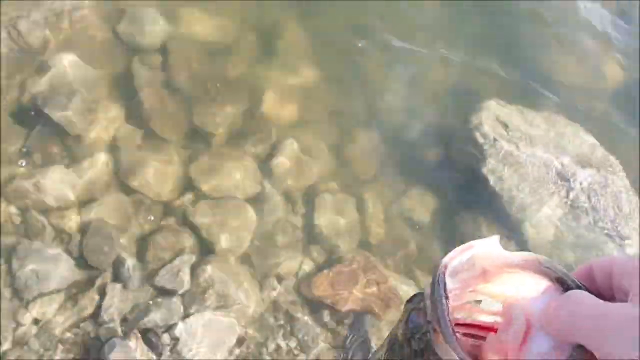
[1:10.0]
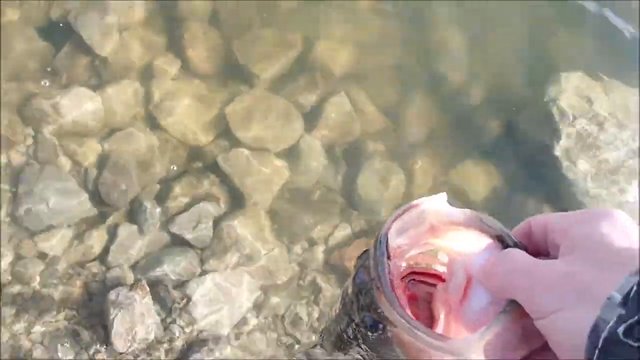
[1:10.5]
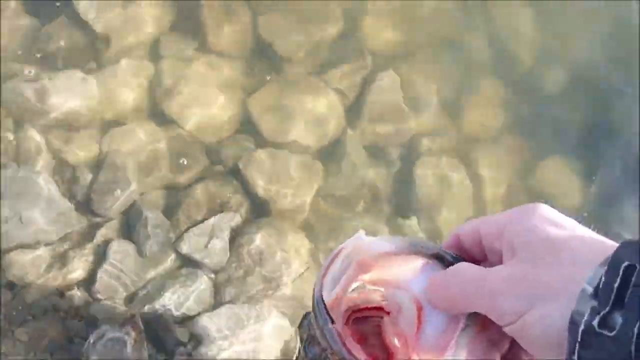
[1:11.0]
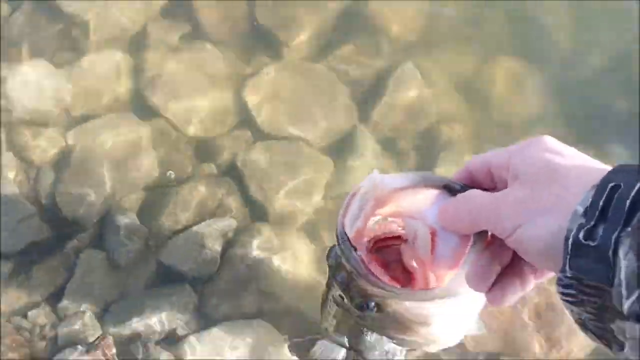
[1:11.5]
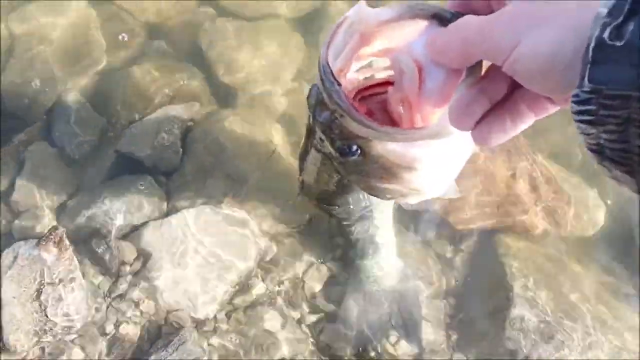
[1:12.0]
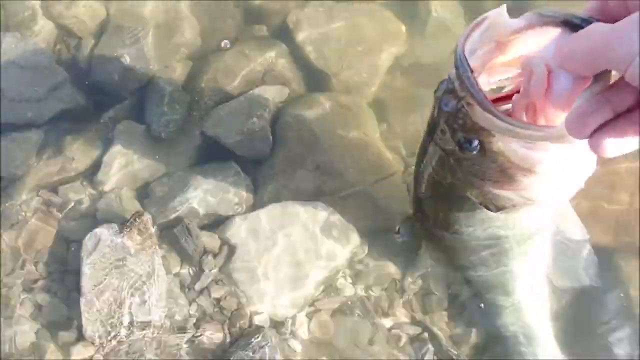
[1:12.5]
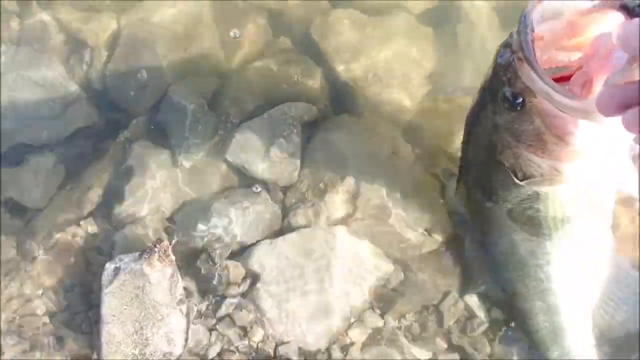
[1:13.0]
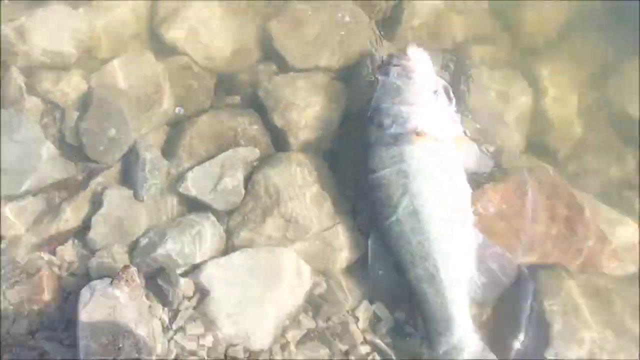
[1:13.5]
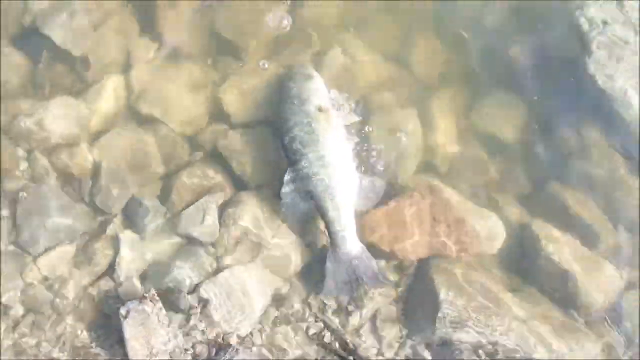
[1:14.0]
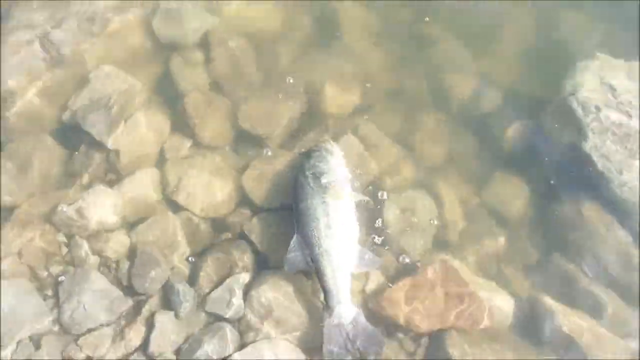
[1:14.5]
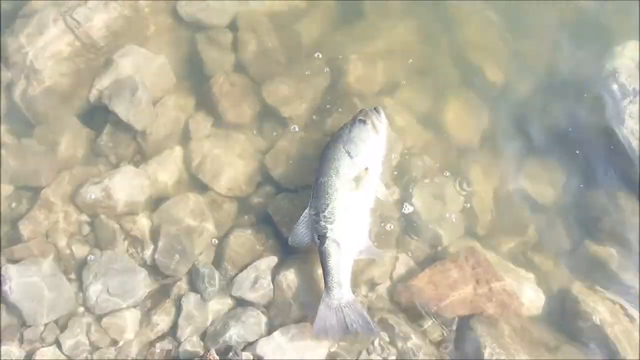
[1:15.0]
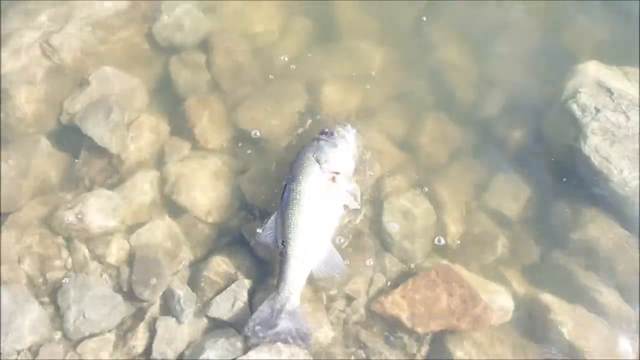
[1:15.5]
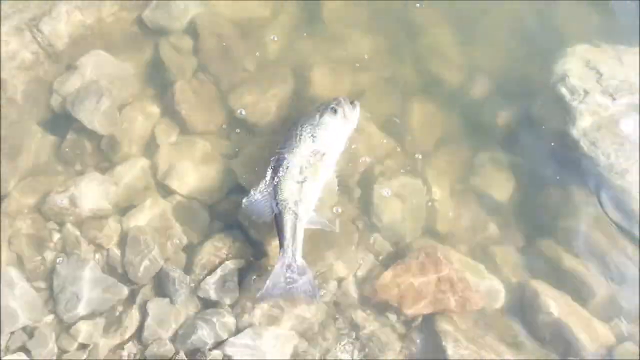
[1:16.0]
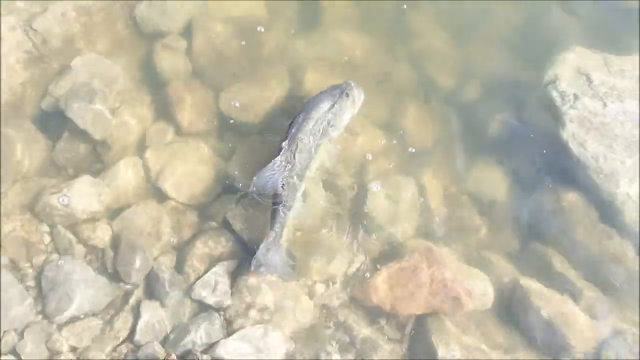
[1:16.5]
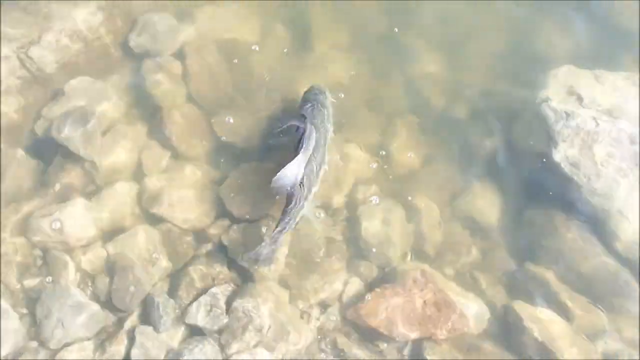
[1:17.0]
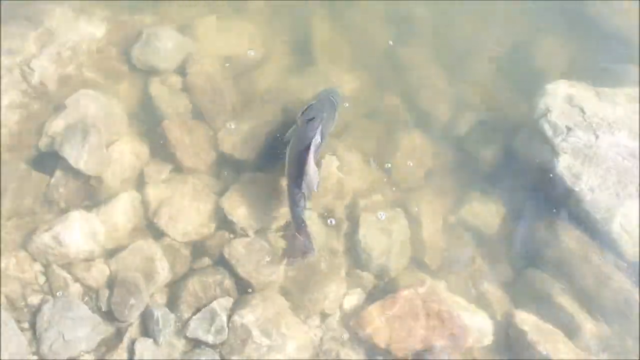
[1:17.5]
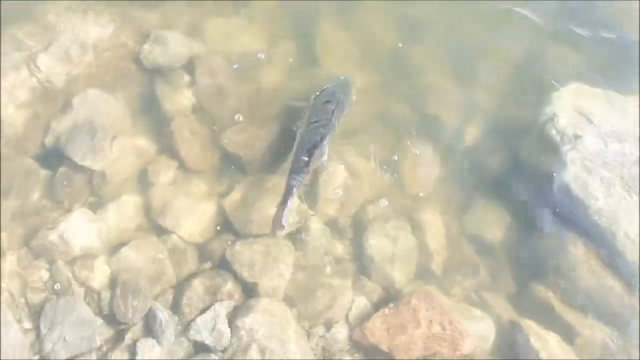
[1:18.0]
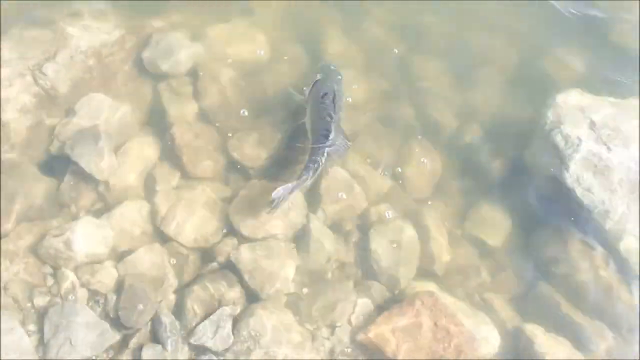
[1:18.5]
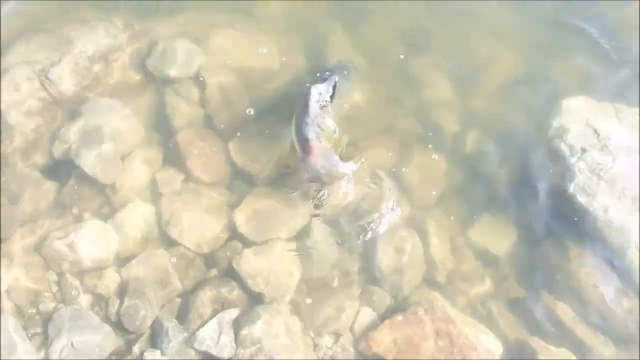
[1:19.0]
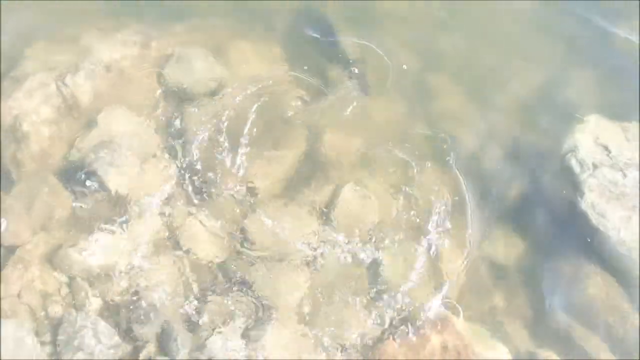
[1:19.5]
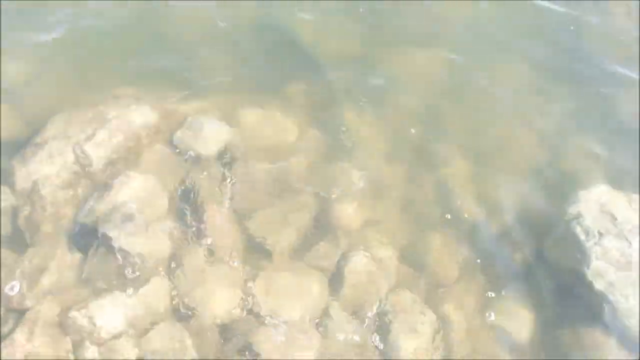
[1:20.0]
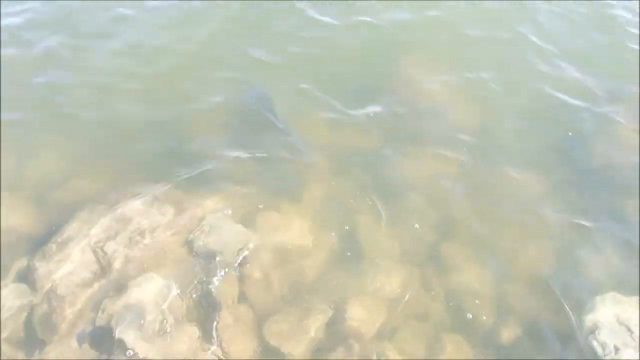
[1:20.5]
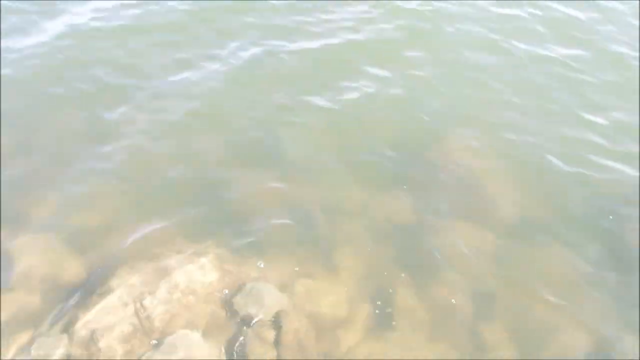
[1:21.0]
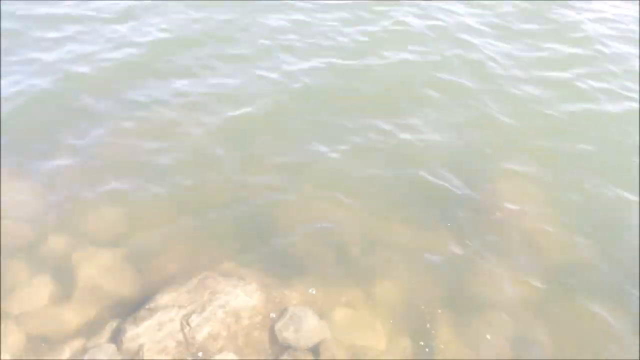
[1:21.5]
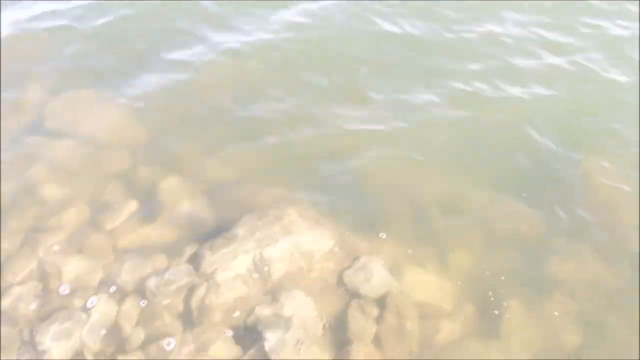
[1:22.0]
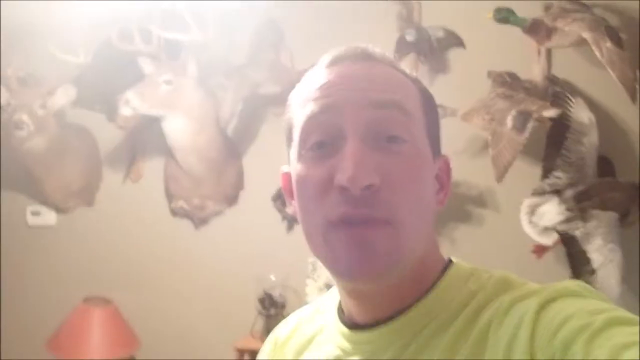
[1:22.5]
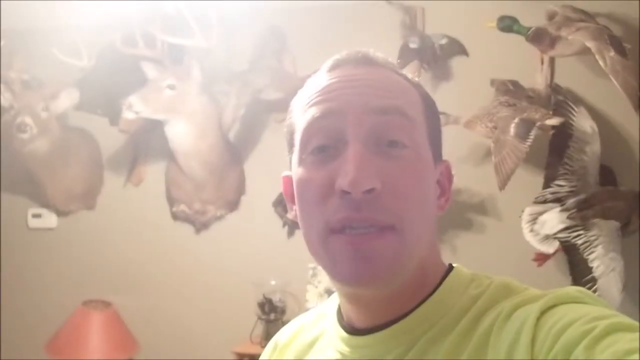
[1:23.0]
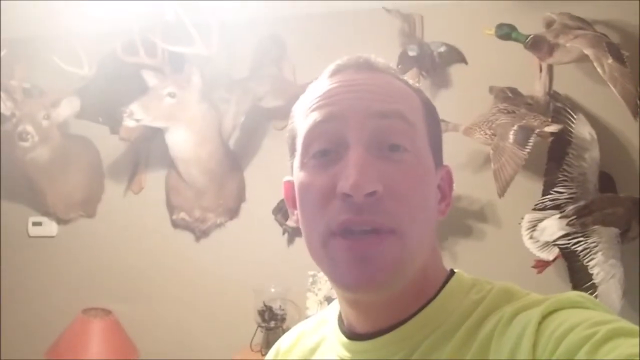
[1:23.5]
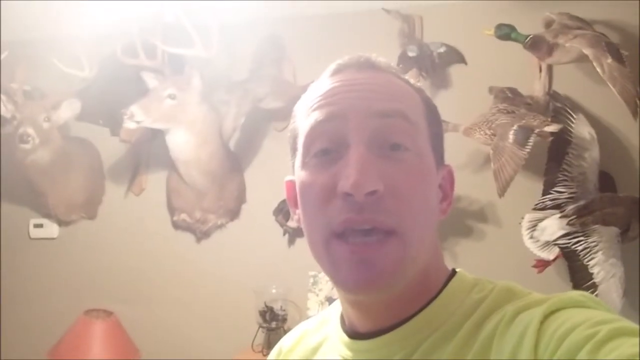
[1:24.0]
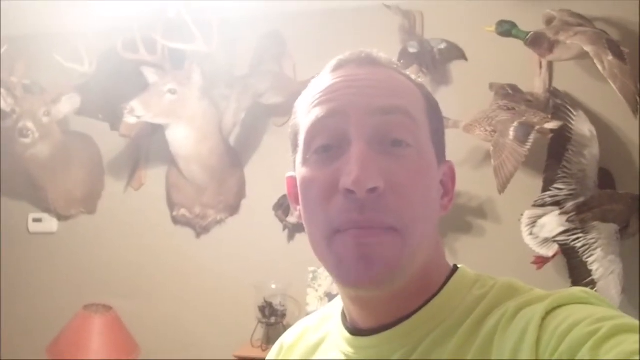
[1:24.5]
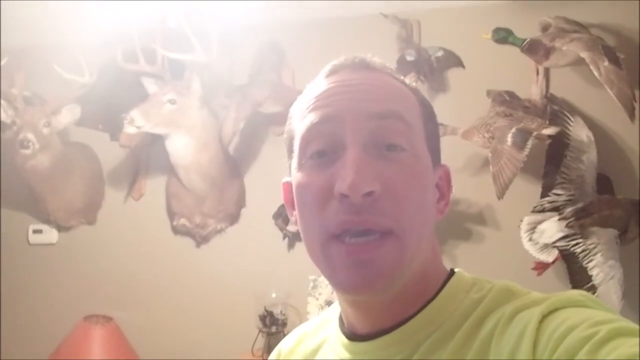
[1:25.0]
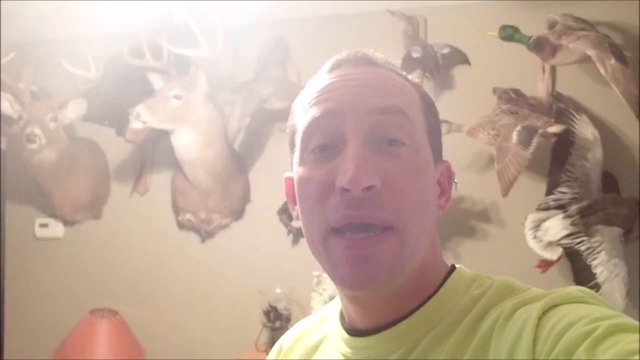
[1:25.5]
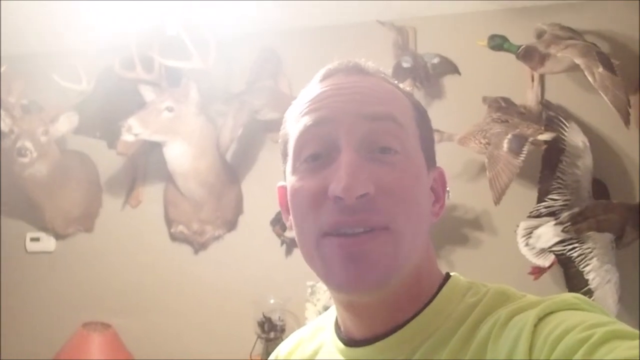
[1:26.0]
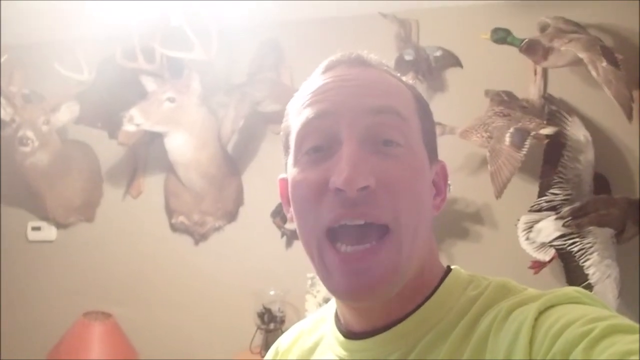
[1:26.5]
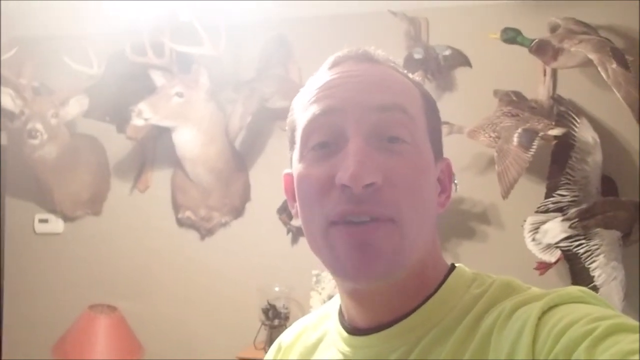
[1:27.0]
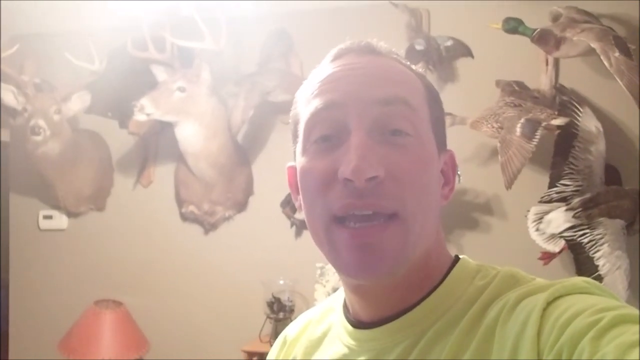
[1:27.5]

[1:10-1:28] Fish float around in water with rocks underneath. The fish seem to be free. The man has just released the fish back into the water.